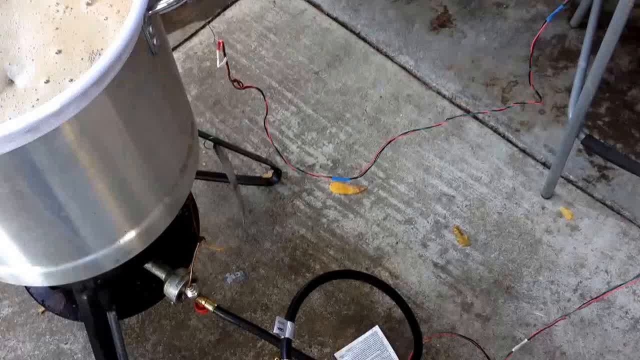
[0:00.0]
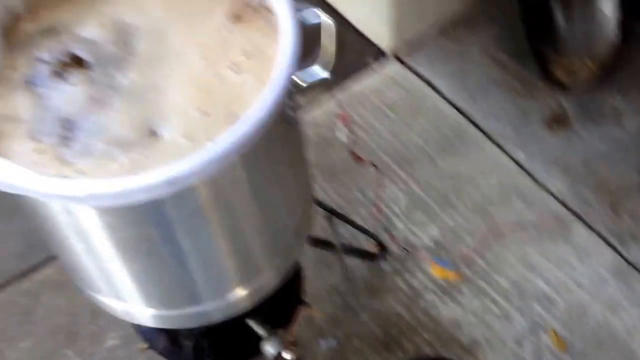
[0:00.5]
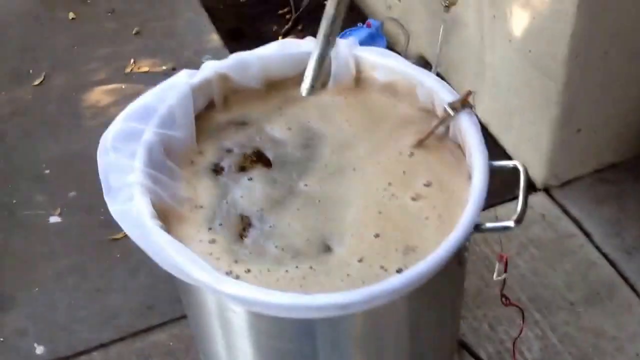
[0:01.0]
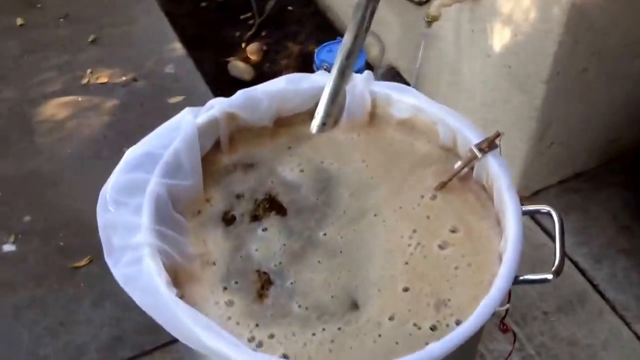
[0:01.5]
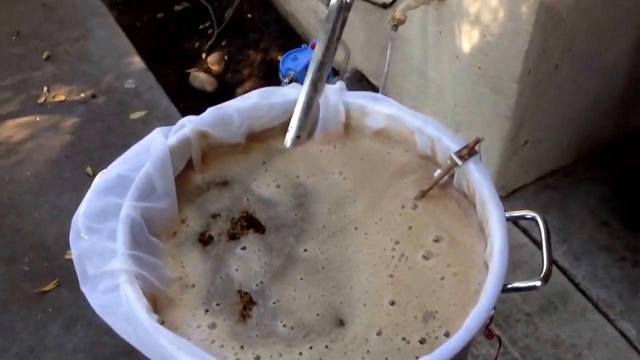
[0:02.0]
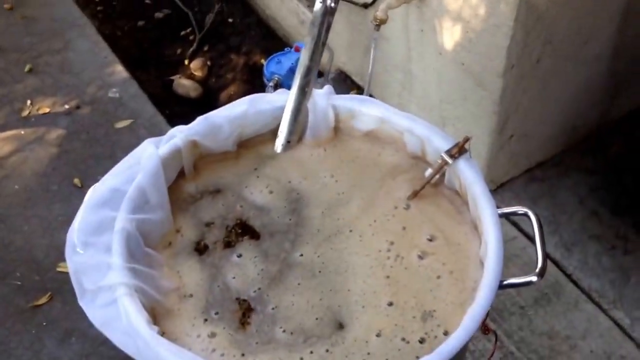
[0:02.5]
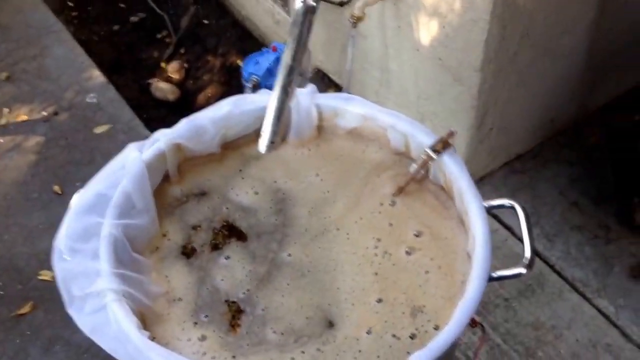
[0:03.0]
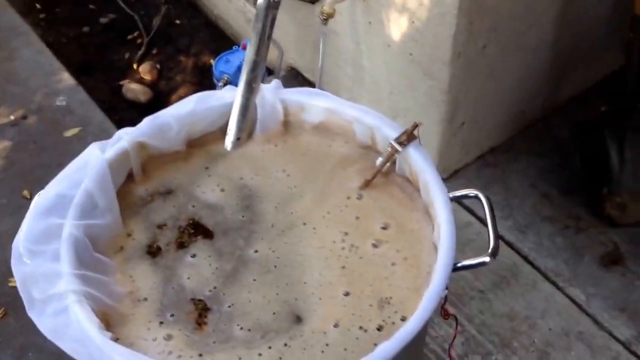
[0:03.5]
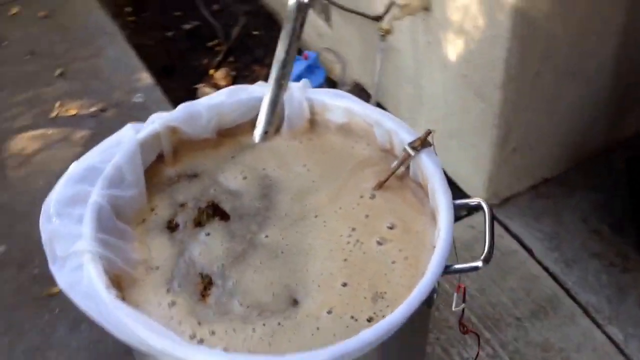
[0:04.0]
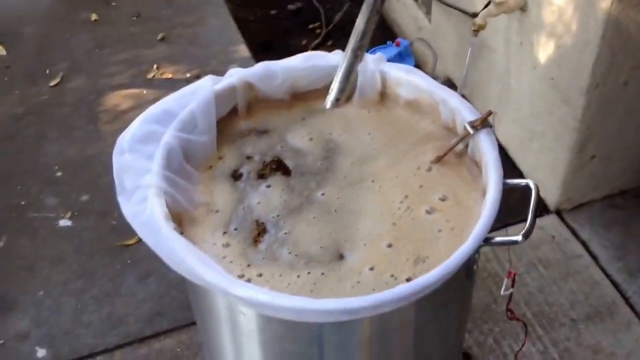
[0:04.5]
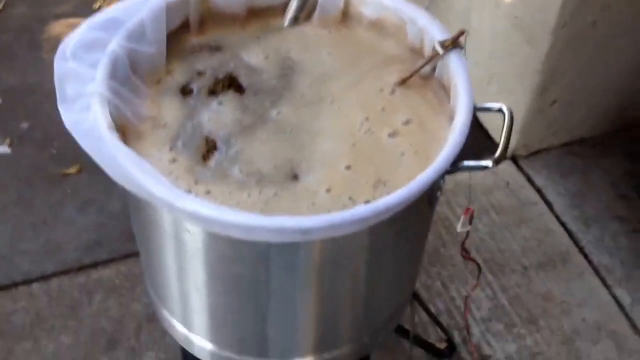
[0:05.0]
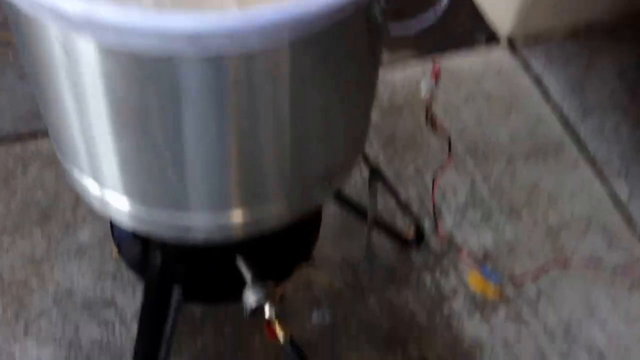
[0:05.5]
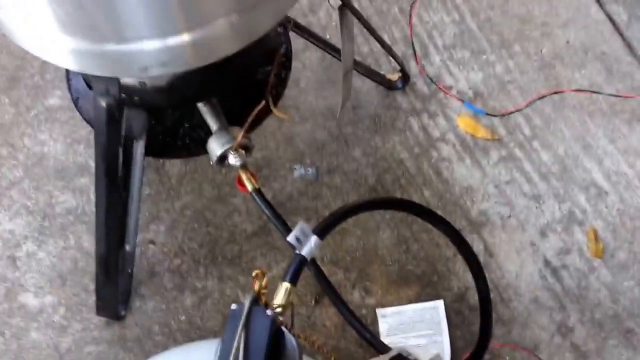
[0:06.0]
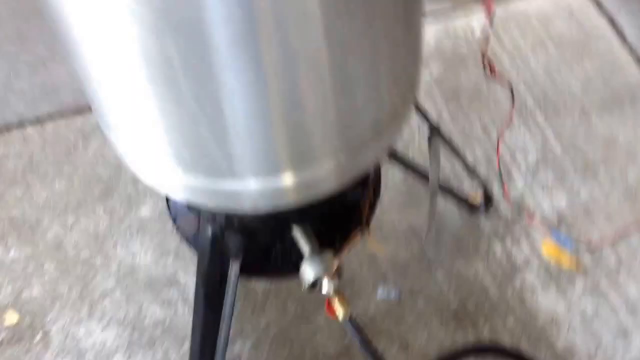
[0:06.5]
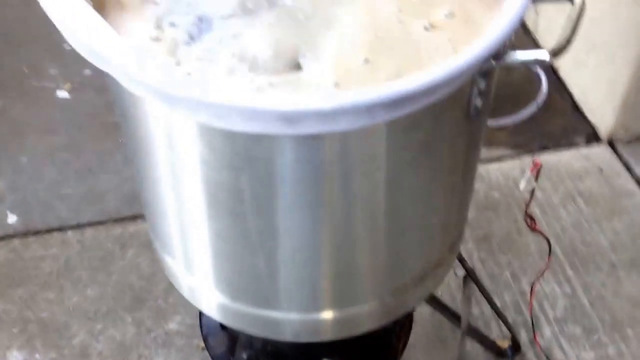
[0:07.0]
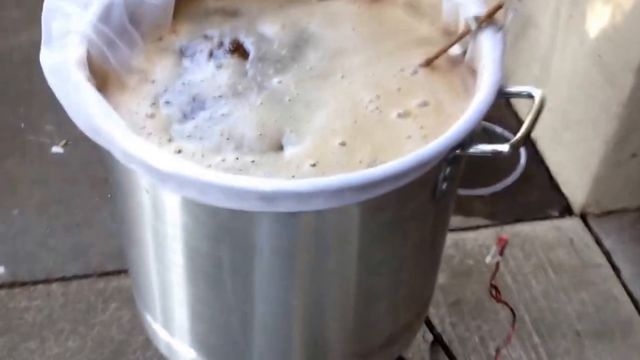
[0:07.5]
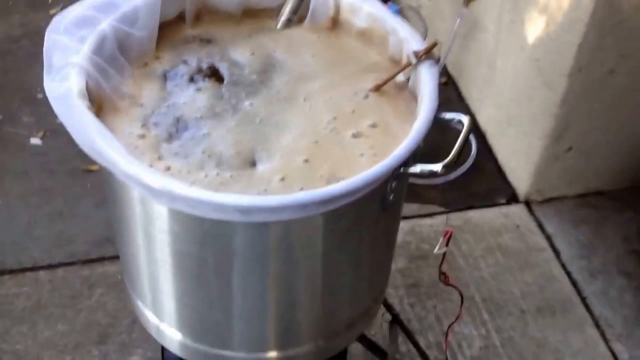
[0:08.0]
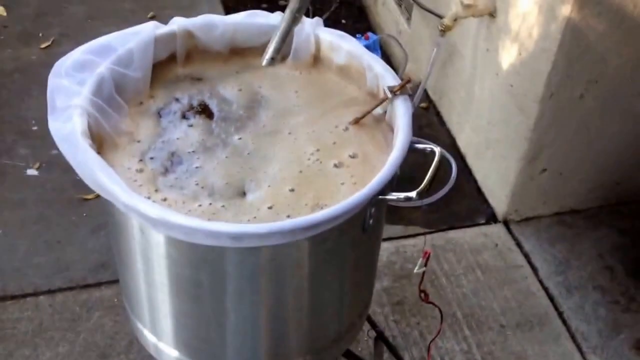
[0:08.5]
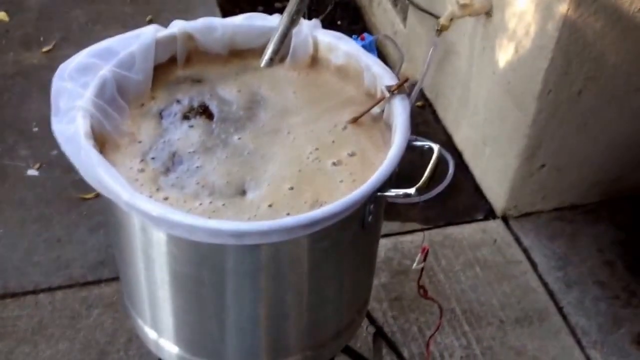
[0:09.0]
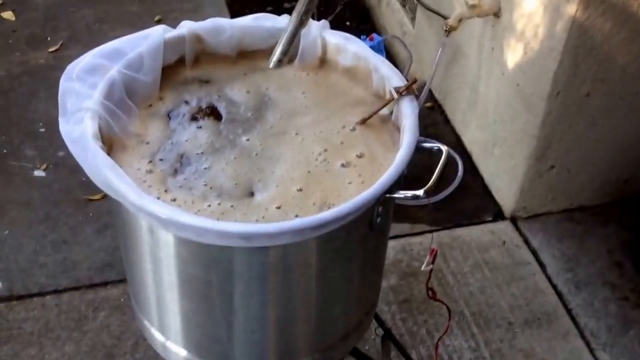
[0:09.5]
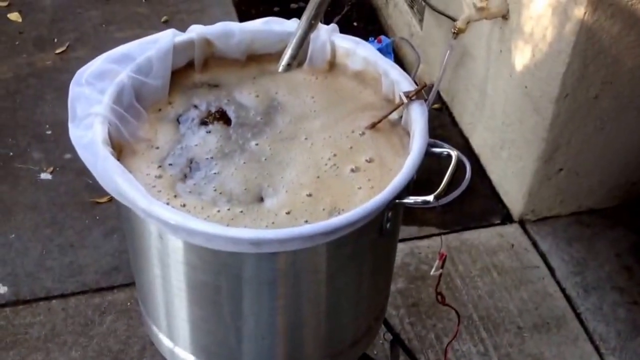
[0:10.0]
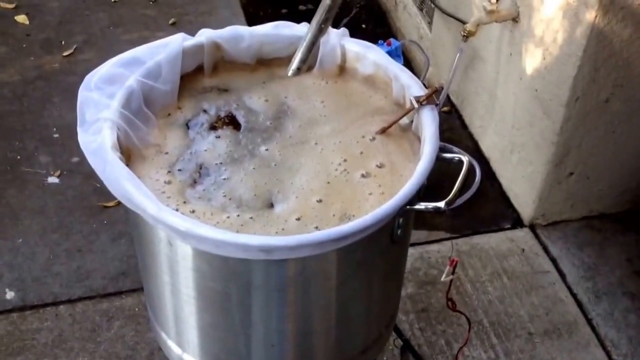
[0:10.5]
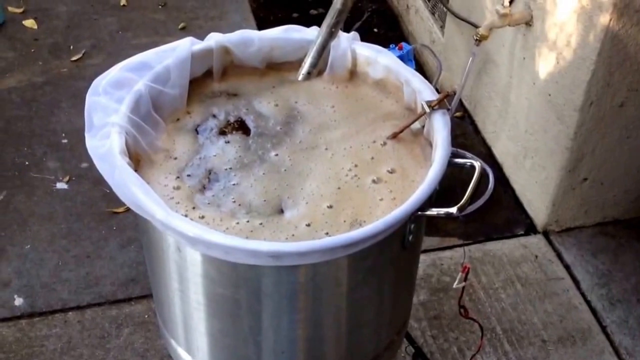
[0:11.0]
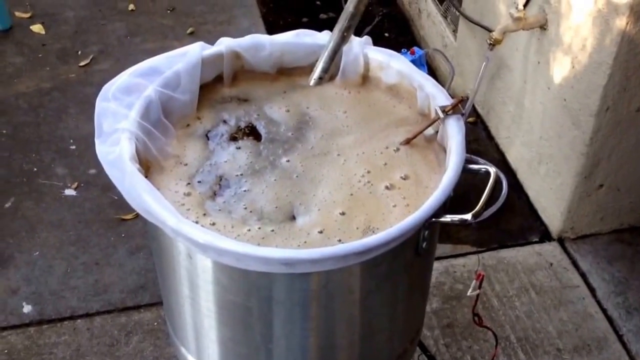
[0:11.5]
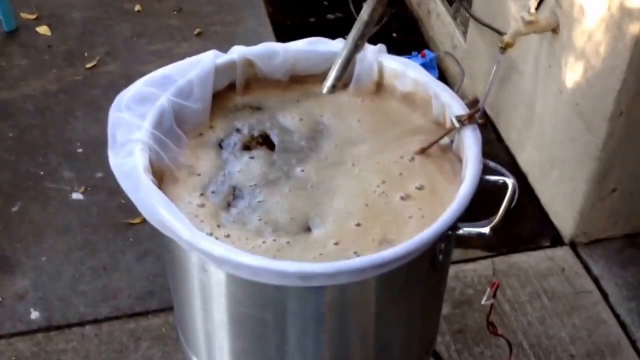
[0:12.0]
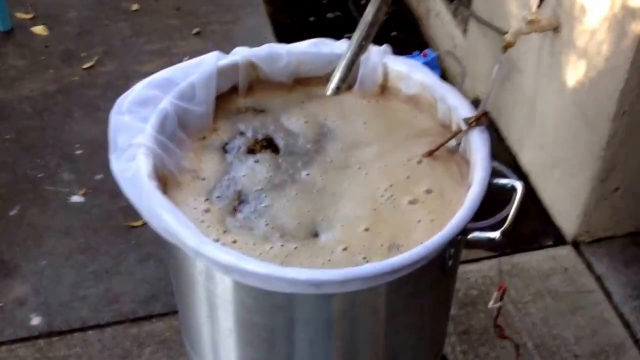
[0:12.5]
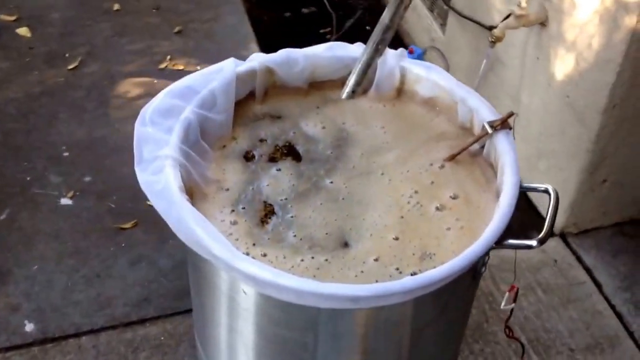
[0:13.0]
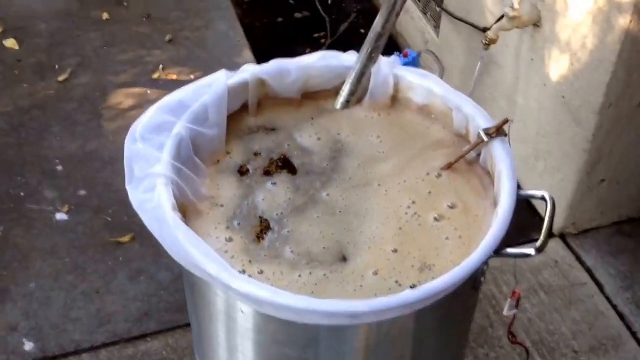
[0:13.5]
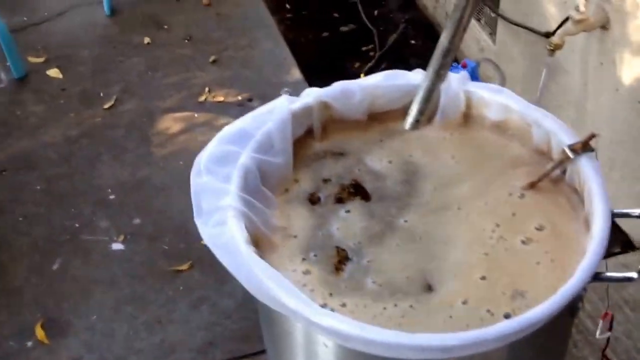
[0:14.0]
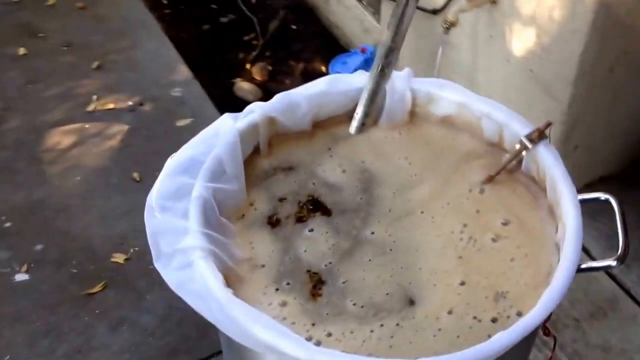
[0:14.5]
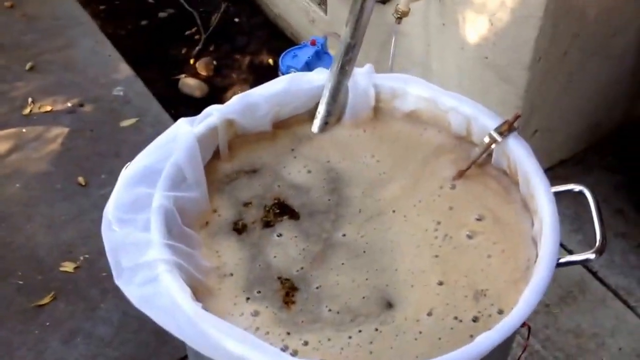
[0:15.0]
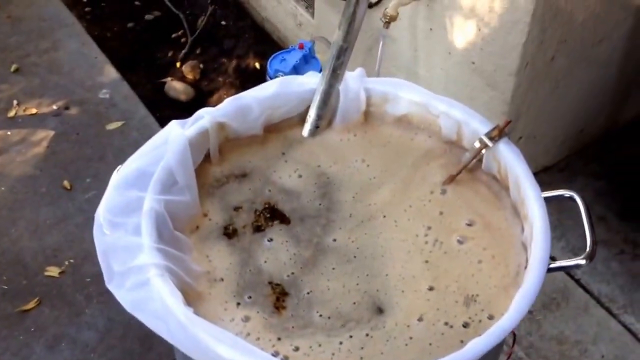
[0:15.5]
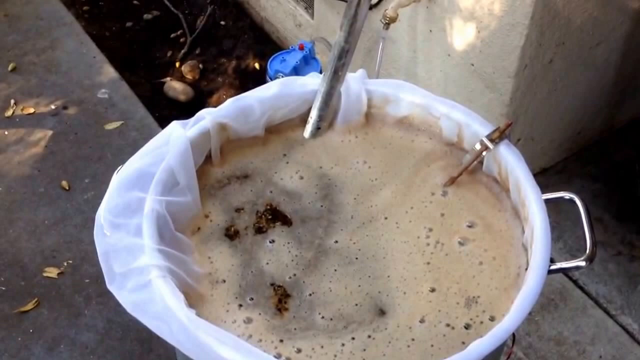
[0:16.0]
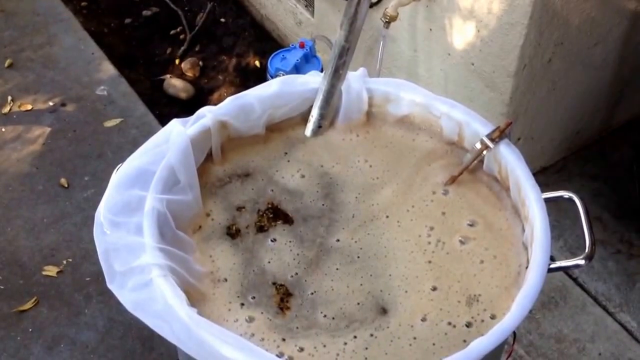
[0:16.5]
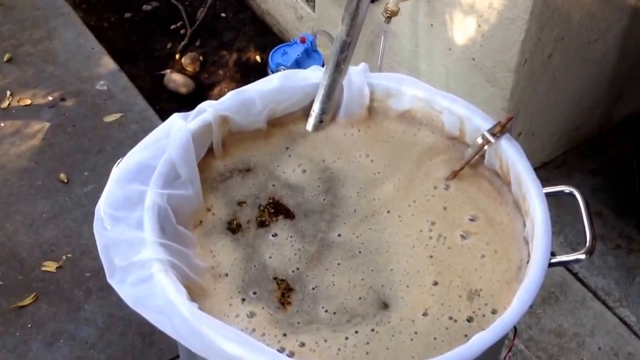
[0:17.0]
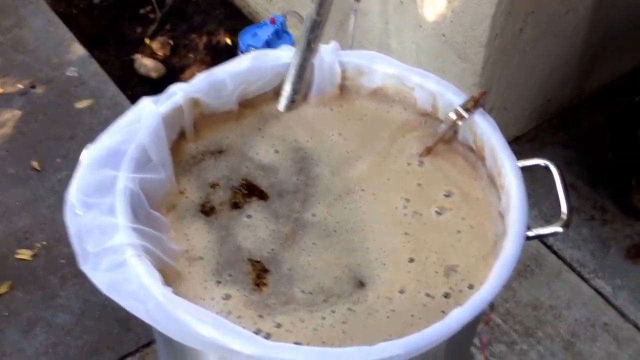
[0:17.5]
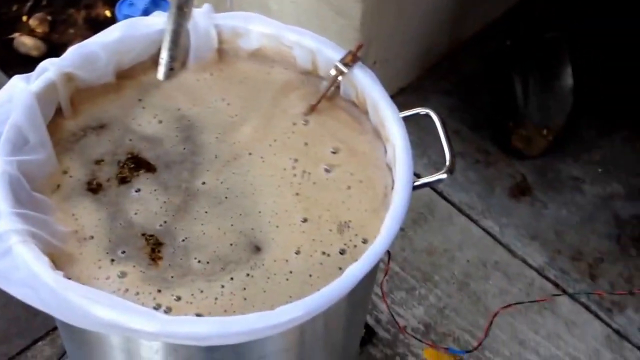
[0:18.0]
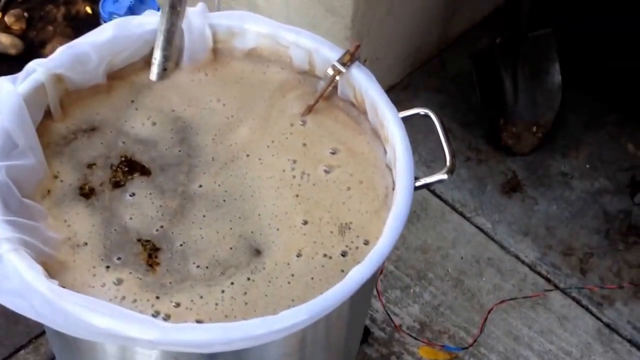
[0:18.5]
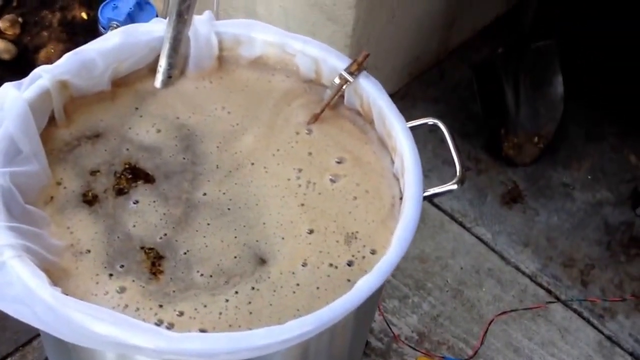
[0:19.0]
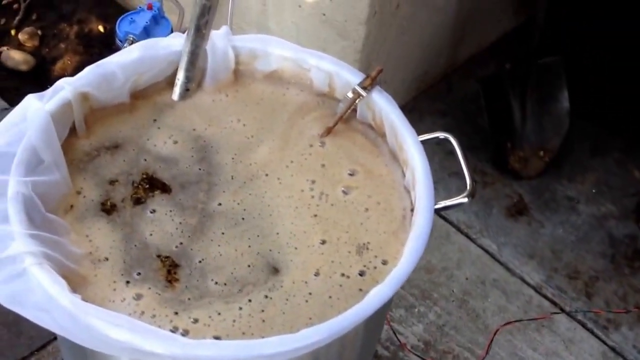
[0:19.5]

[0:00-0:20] A large metal pan rests on top of a camping gas burner in what appears to be an outside area with a rough wooden floor. Inside the pan is a muslin bag, wrapped around the full edge of the pan. The pan is filled with a brown liquid with a white, cream-brown foam on top. A stirrer and what appears to be a thermometer are inside the pan, all within the muslin bag. The camera pans around and gives a close-up of the liquid. A black hose-type fuel line comes into the gas stove, and various wires are strewn about the wooden floor. The outside area has a cream outside wall and an unplanted area of mud, and what may be metal table or chair legs are visible in the shot.